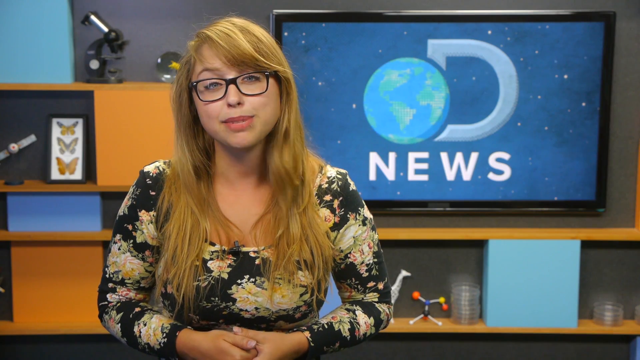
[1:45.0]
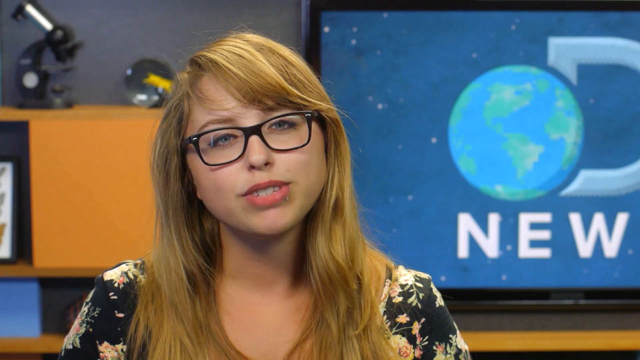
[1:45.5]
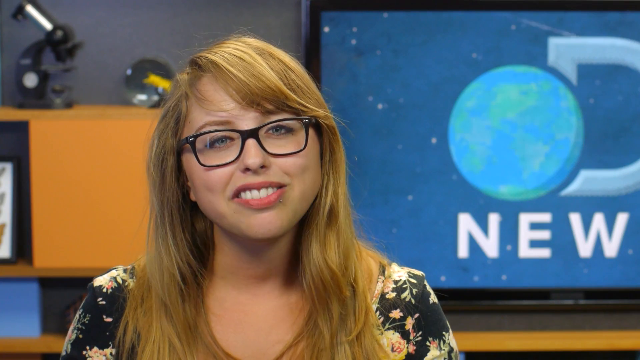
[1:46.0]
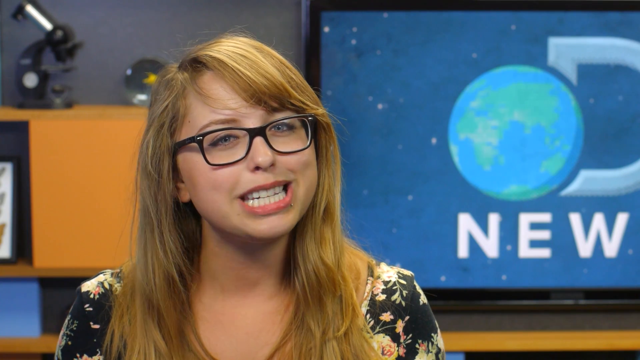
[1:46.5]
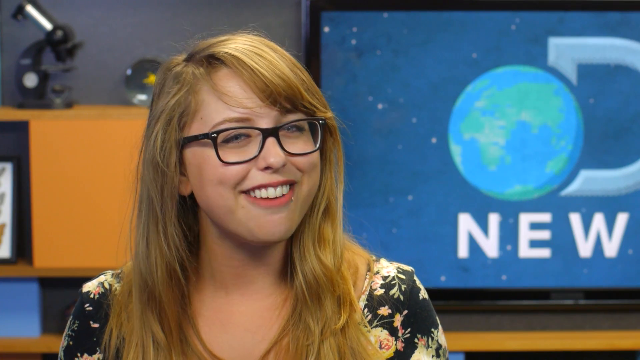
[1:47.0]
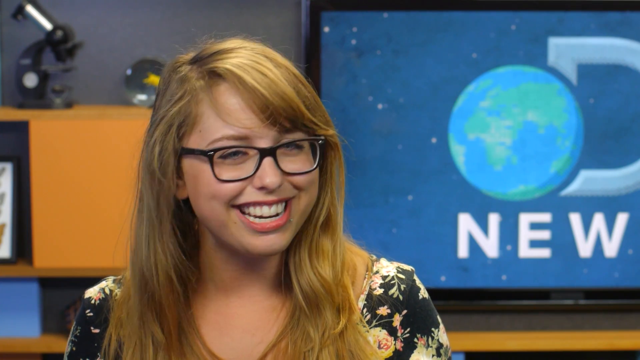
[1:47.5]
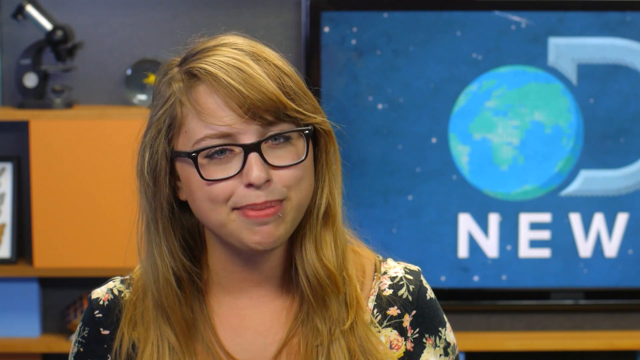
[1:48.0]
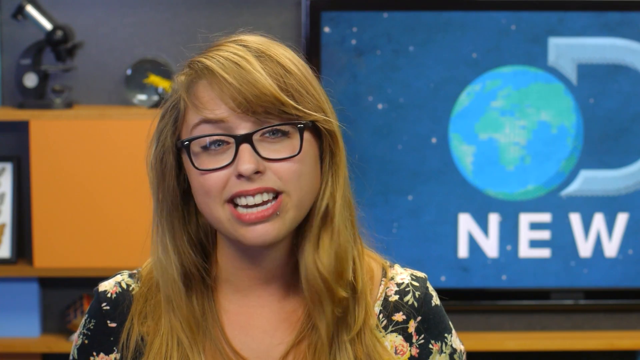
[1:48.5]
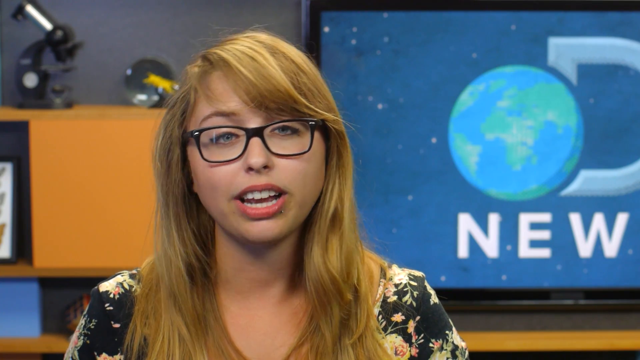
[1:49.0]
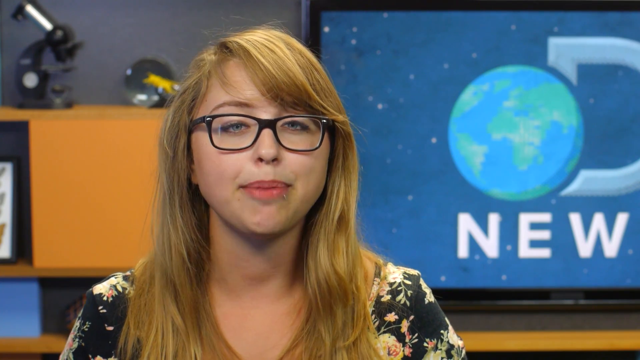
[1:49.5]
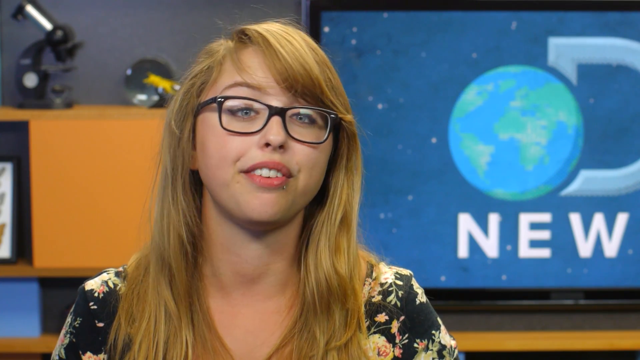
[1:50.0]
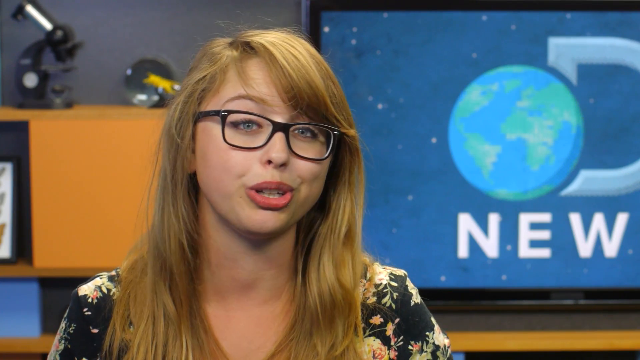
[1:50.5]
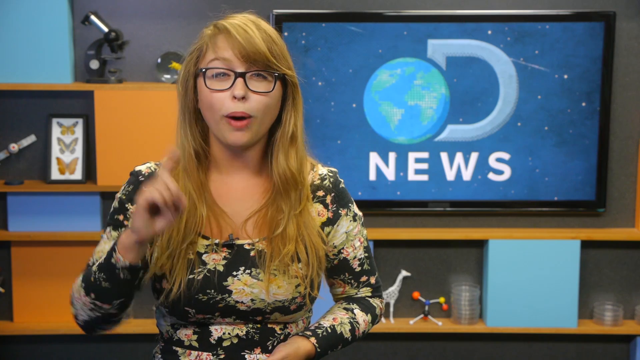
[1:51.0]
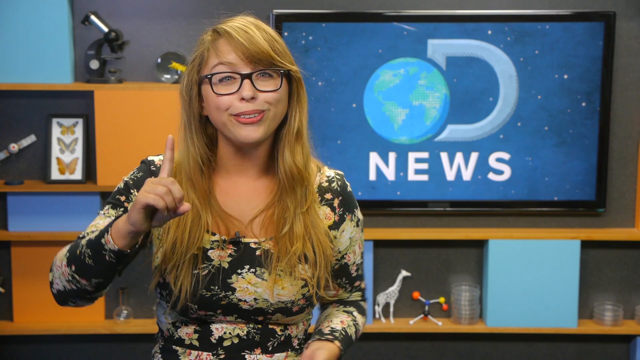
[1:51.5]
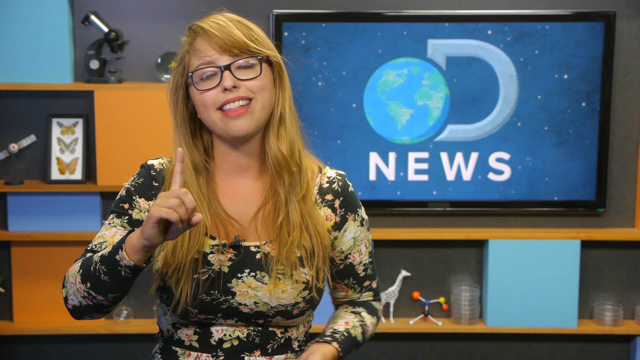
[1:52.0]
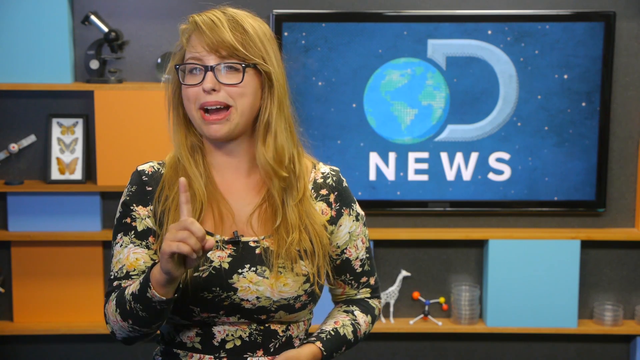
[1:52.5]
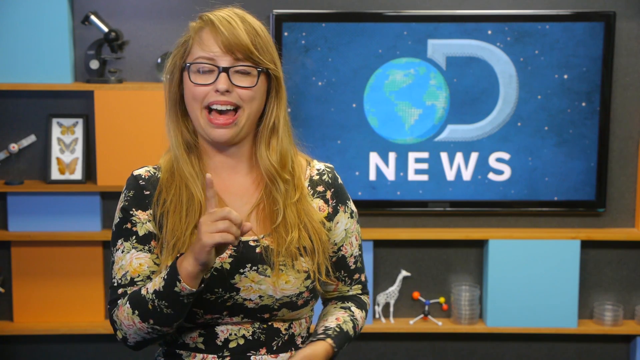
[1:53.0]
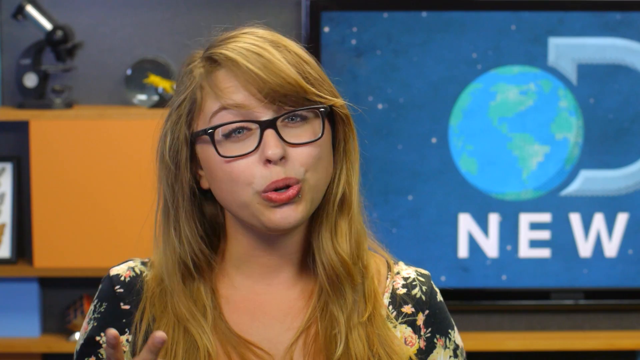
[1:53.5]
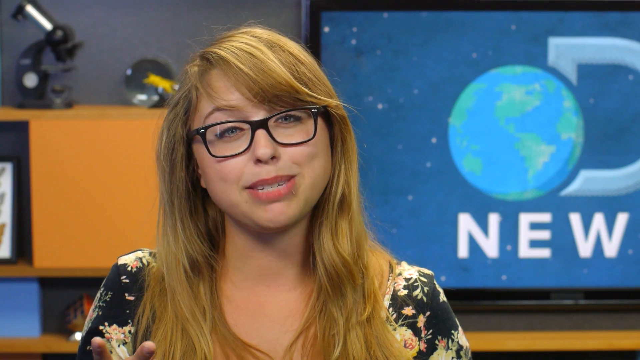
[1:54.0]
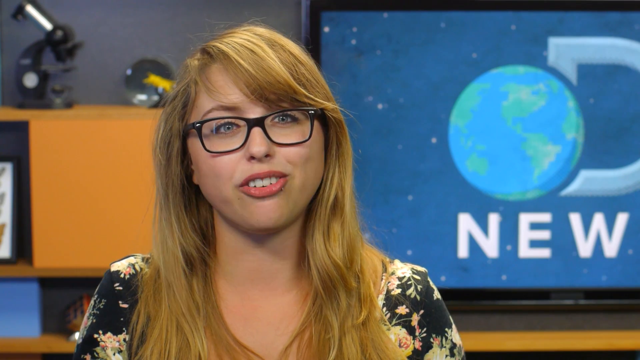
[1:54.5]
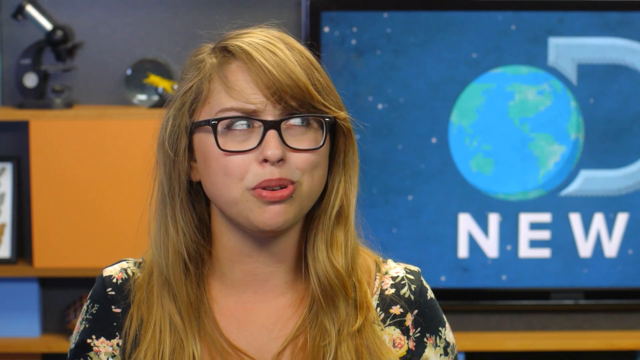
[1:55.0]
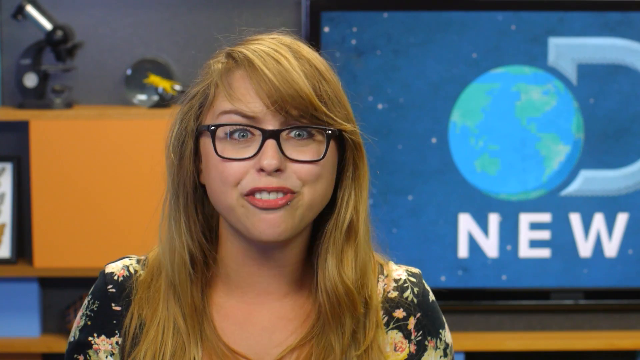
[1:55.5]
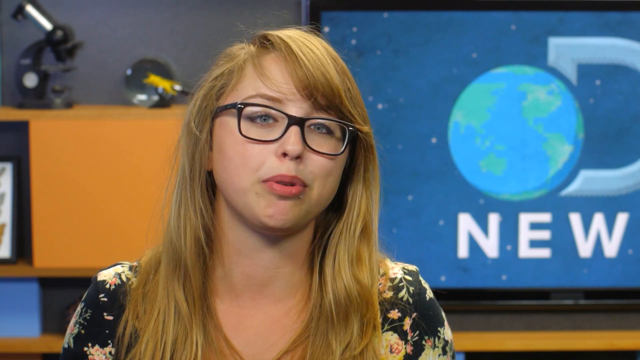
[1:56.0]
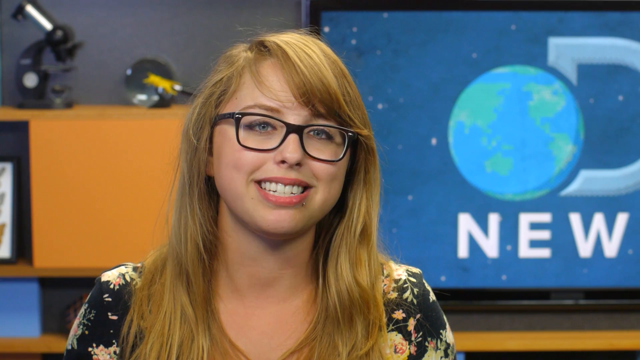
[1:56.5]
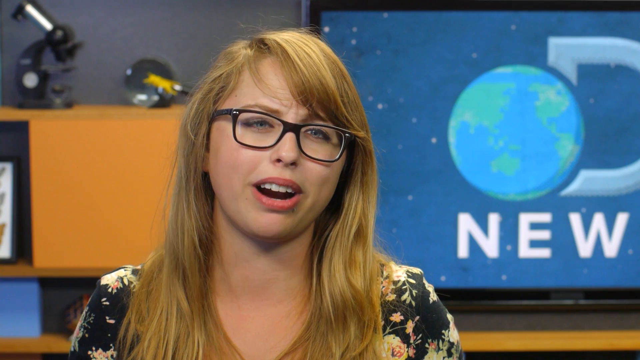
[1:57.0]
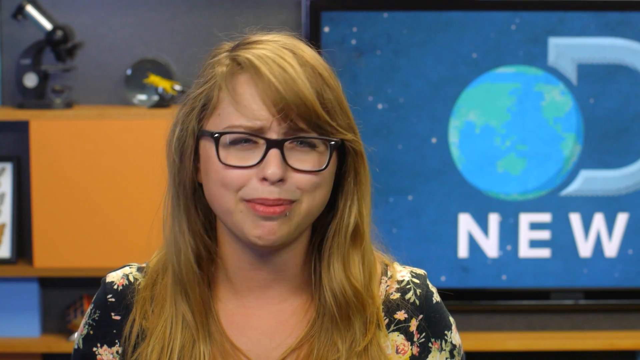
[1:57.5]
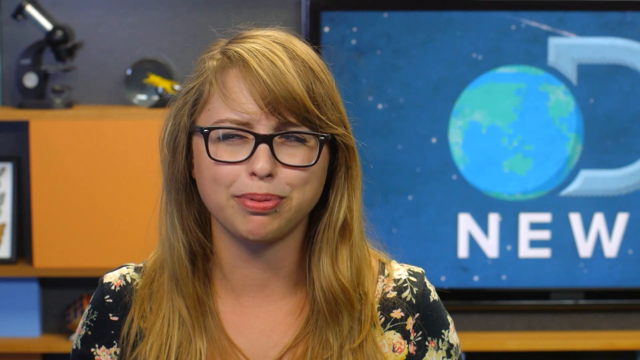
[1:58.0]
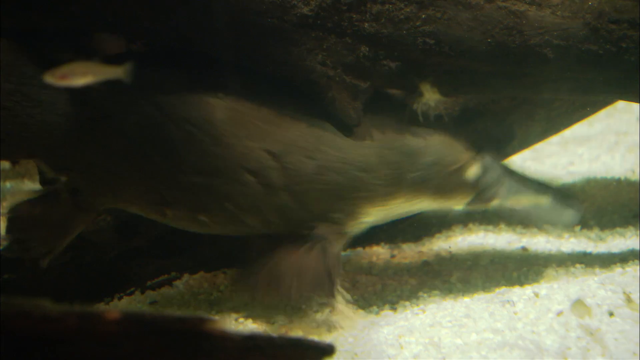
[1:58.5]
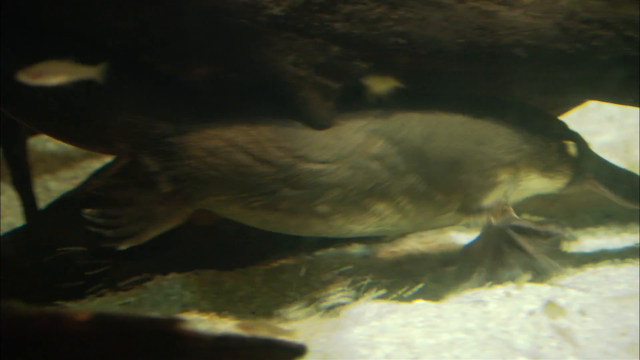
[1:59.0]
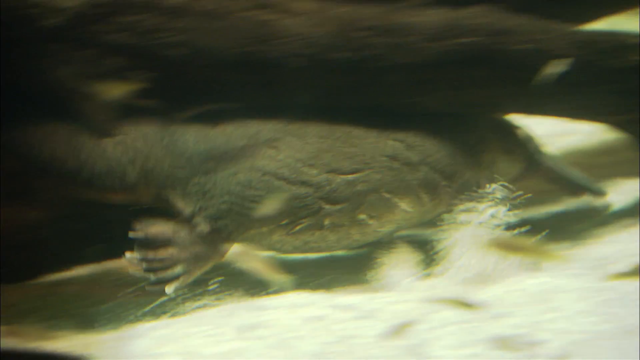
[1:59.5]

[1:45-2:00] Laci is in the studio with animated gestures, with the screen and the microscope behind her. Then a quick segment shows something underwater that goes past fast and looks like a seal or possibly an otter: a gray mammal with a long bill swimming quickly underwater, seemingly as if trying to get away from something. It kicks up some sort of white gravel, sand or pebbles on the bottom as it swims fast underneath a log. The video goes back and forth between this footage and Laci in the studio, where she is animated.